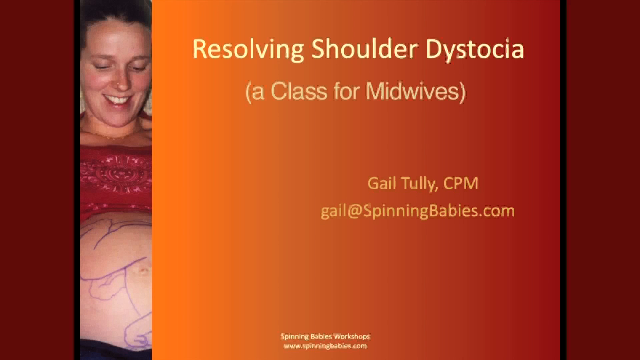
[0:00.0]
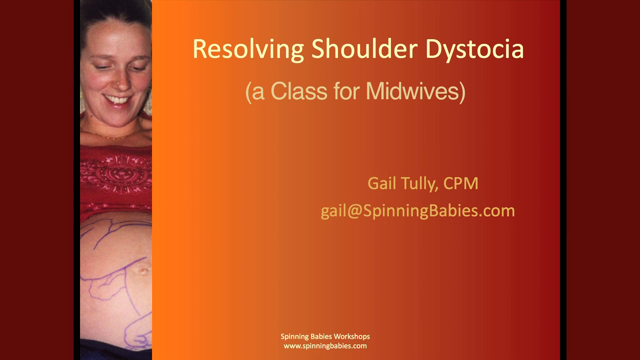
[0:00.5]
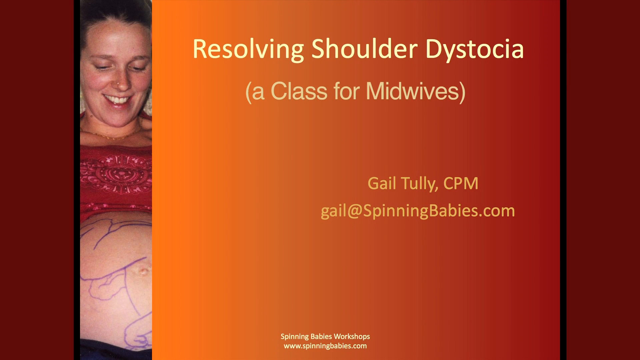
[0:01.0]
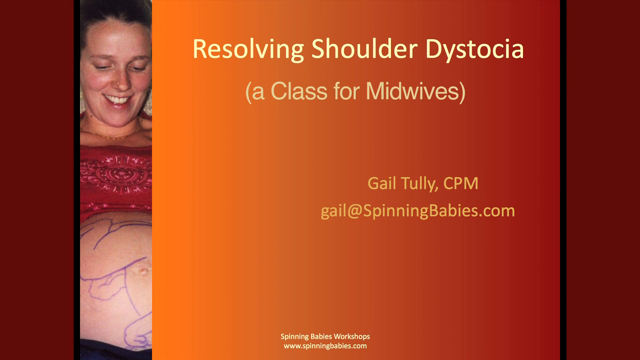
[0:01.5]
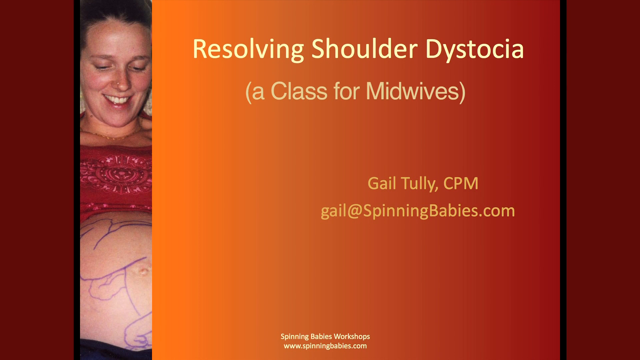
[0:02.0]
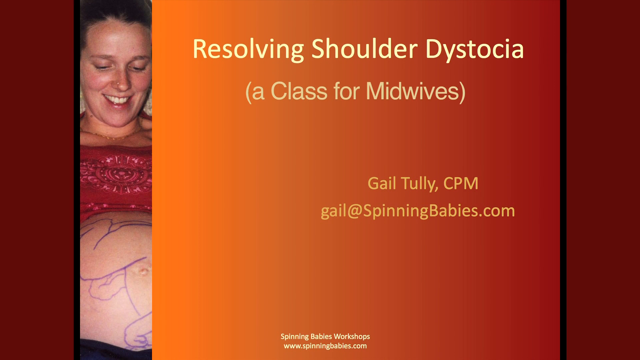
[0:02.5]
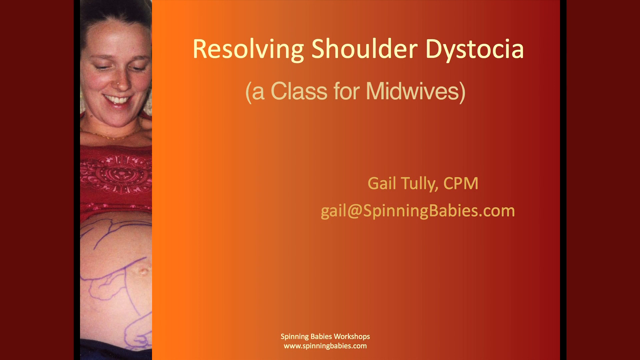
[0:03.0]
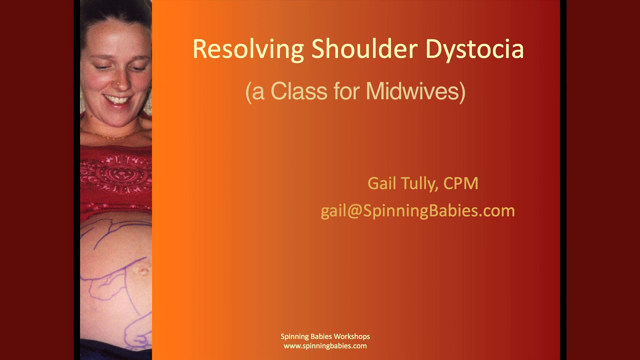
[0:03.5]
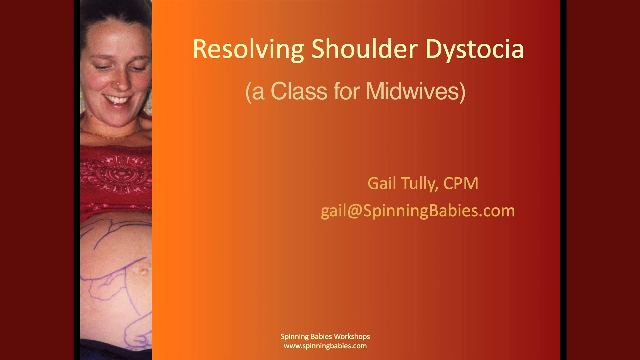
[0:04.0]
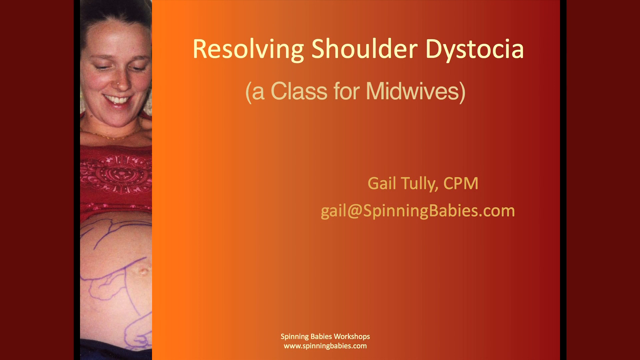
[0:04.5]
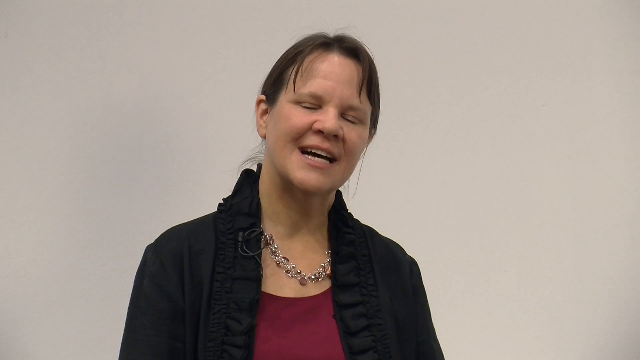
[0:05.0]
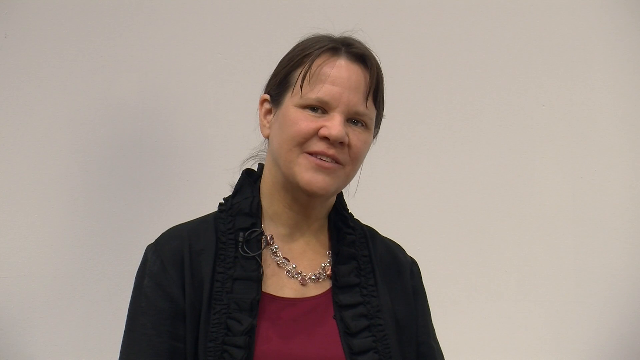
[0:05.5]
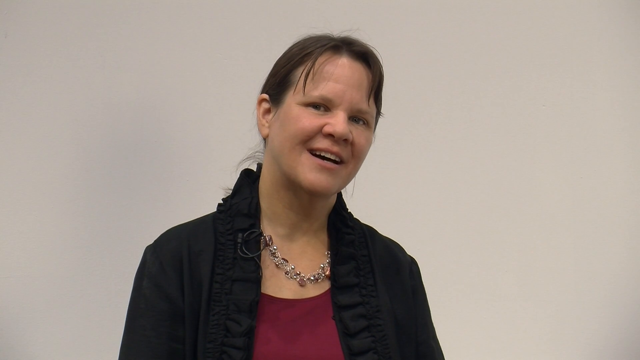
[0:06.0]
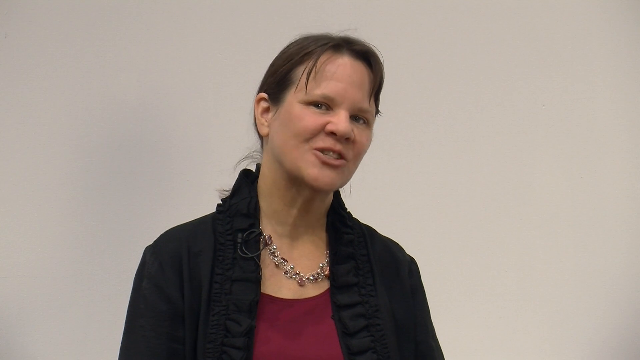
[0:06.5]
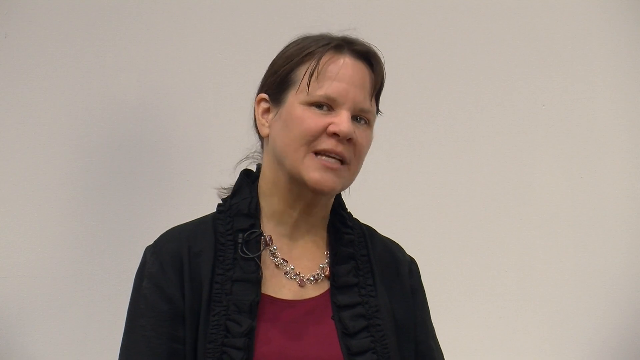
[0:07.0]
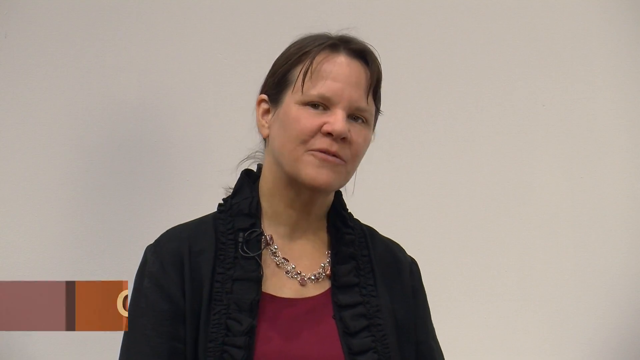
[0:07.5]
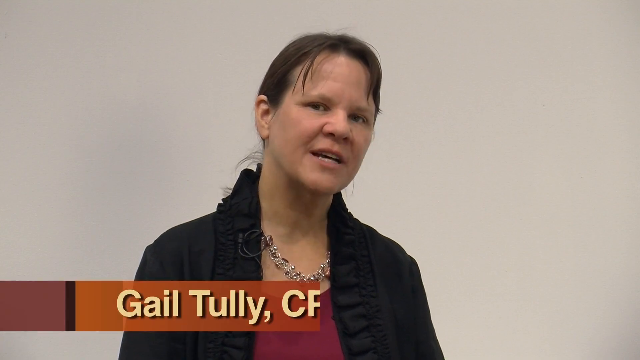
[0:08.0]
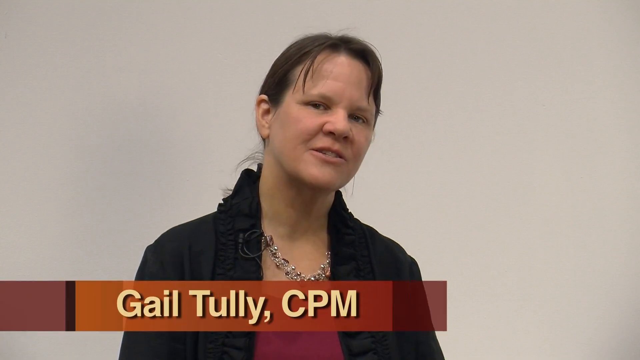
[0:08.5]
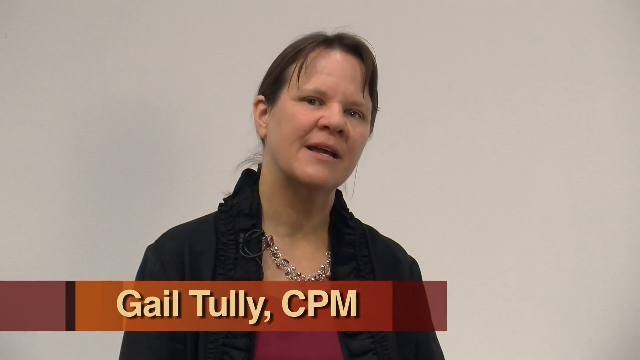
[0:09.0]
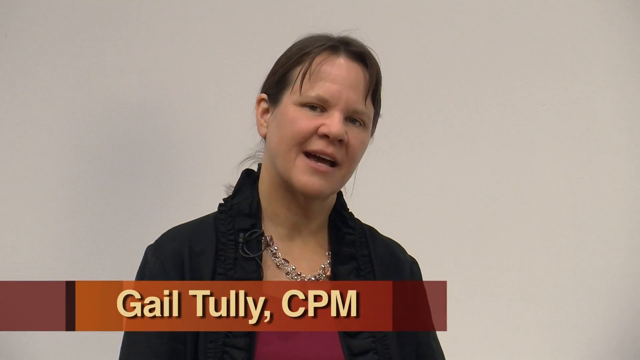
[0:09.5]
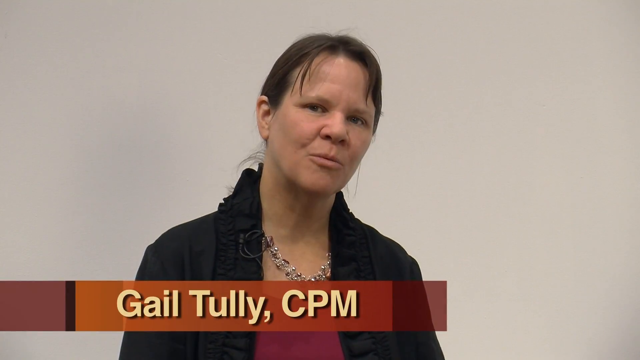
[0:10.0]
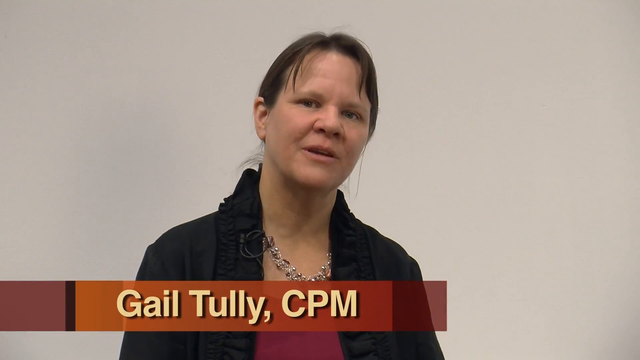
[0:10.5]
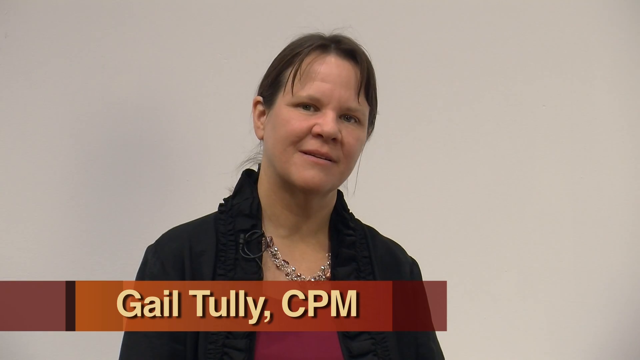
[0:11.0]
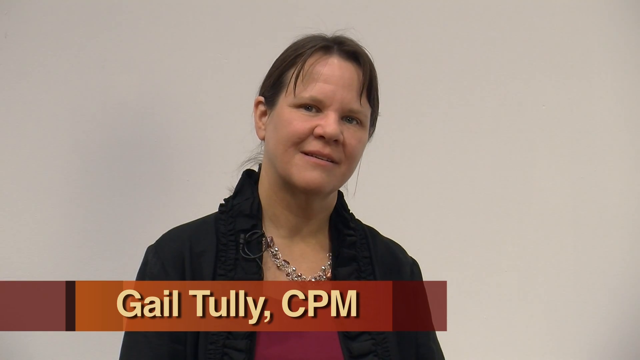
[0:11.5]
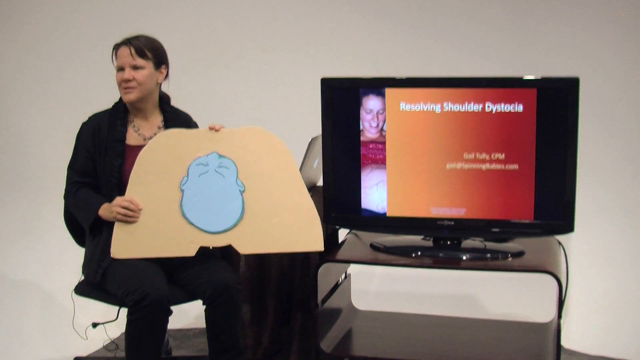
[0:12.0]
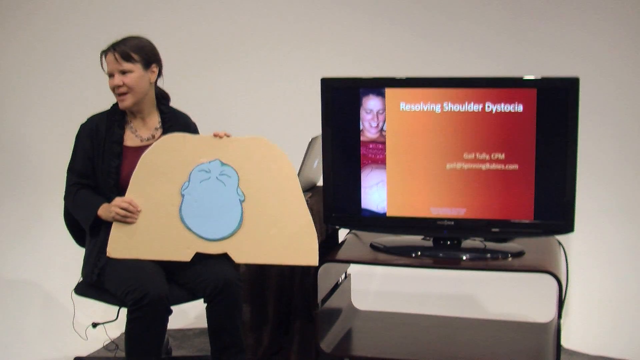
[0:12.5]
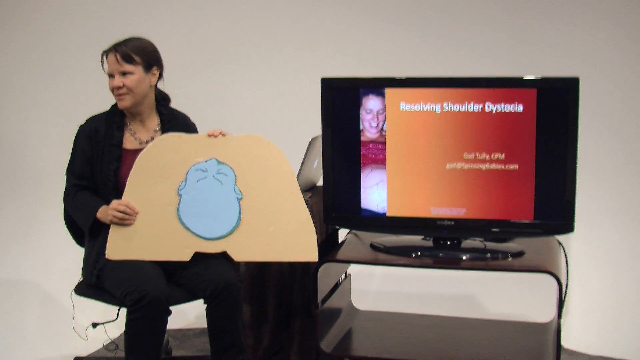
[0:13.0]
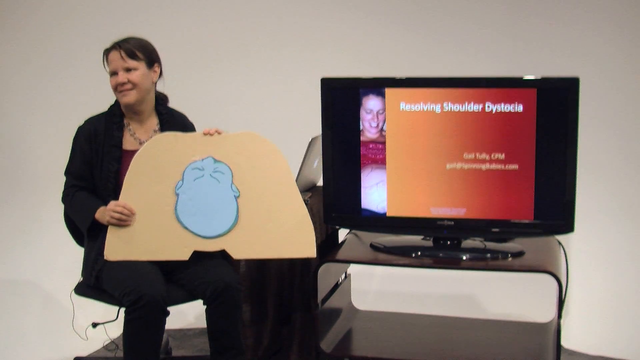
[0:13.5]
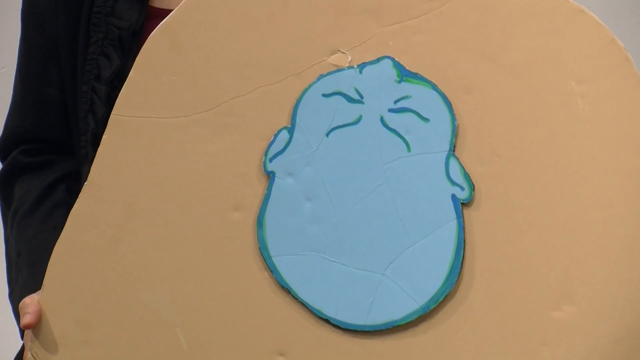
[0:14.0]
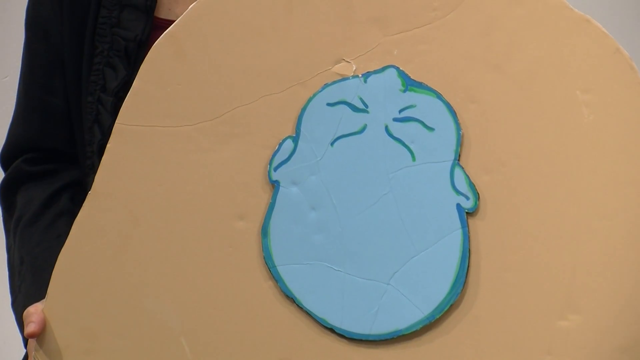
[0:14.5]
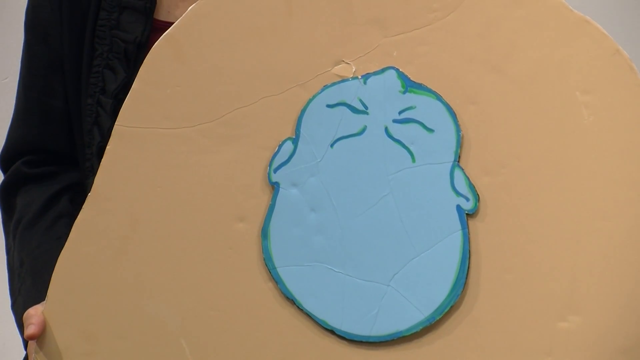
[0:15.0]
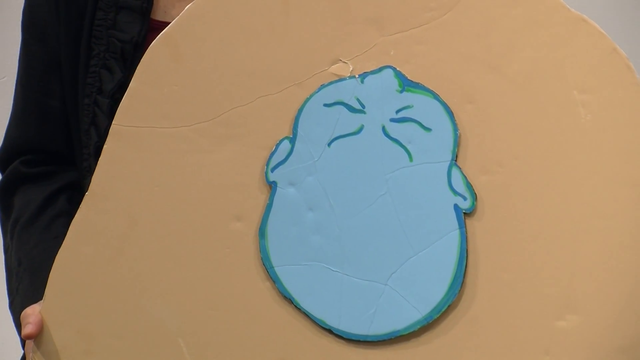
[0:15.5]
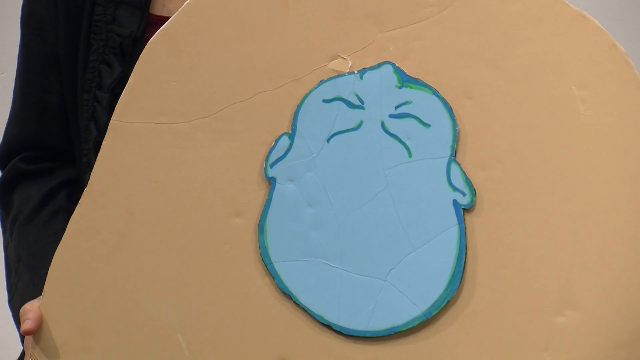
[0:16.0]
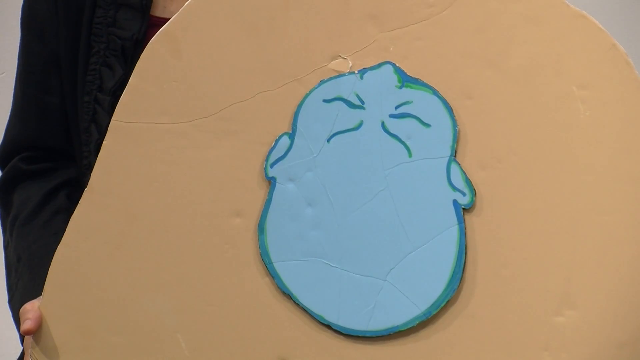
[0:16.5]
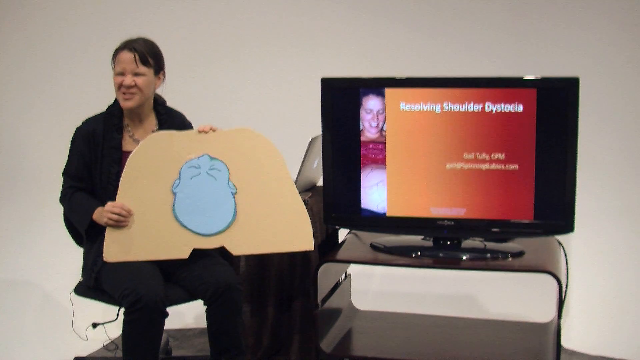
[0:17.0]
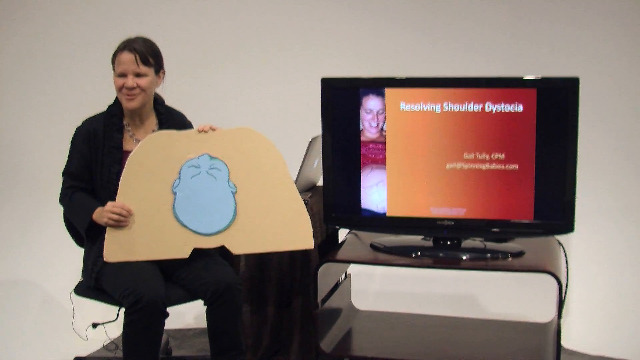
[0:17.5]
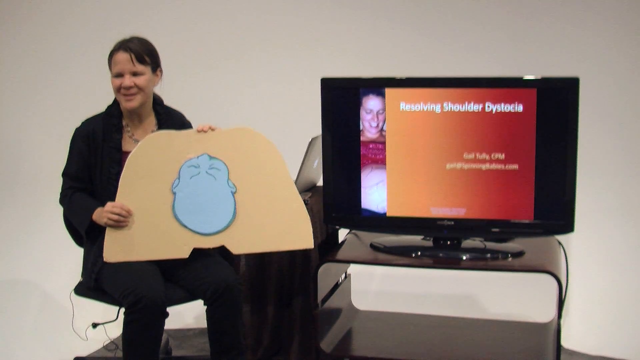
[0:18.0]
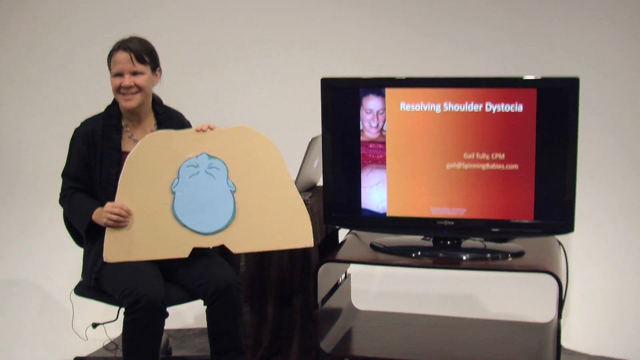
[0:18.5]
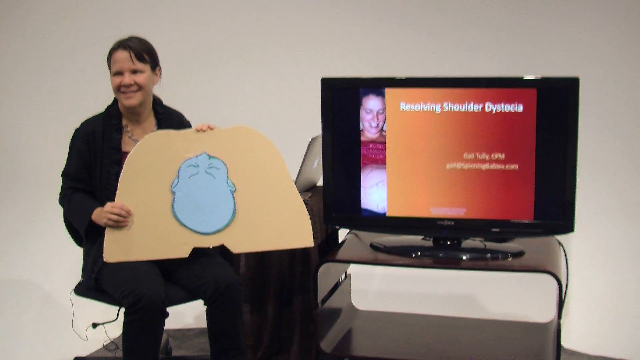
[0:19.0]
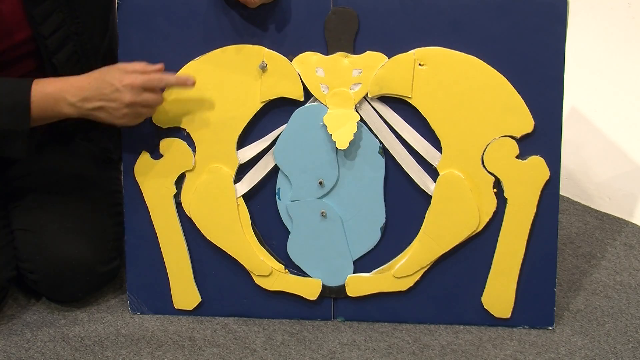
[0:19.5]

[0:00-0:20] The video opens on a presentation-style title screen for an educational class for midwives on resolving shoulder dystocia, led by Gail Tully CPM, with the email address gail@spinningbabies.com. On the left side of the screen is a woman who appears to have a pregnant belly, with a baby drawn onto her bum. The title screen disappears and a brown-haired Caucasian woman appears, talking toward the screen; she is presumably the midwife leading the talk. Her name then appears on screen, identifying her as Gail from the title screen. A wider shot follows: a black flat-screen TV showing the title page is on a high-gloss unit on the right, and Gail is sitting on a stool to the left. She appears to be holding a cardboard cutout meant to look like a woman's external pelvis with a baby's head that has just been born. Gail addresses people who cannot be seen on camera. As the shot ends, a 2D DIY model of a woman's pelvis with a 2D baby in place is visible.